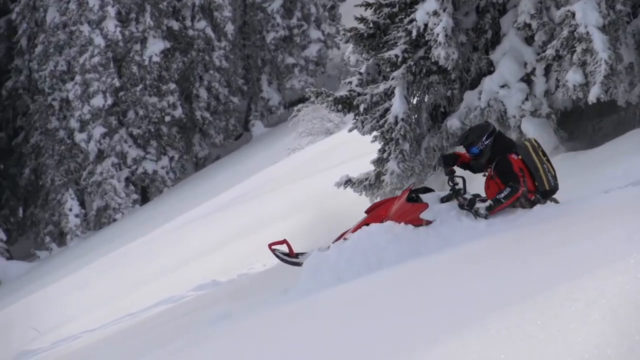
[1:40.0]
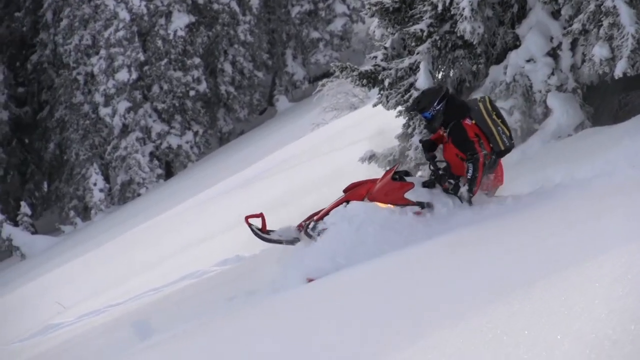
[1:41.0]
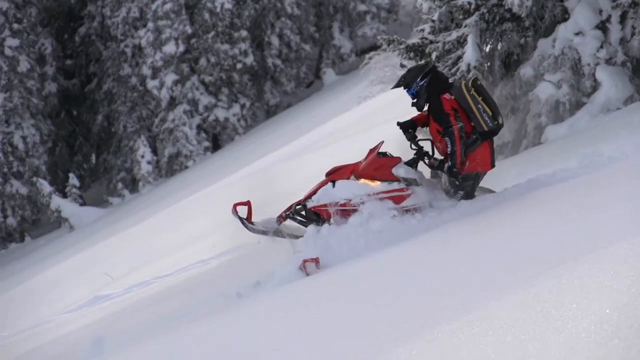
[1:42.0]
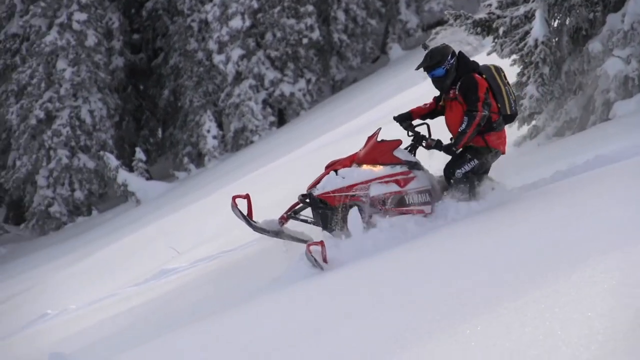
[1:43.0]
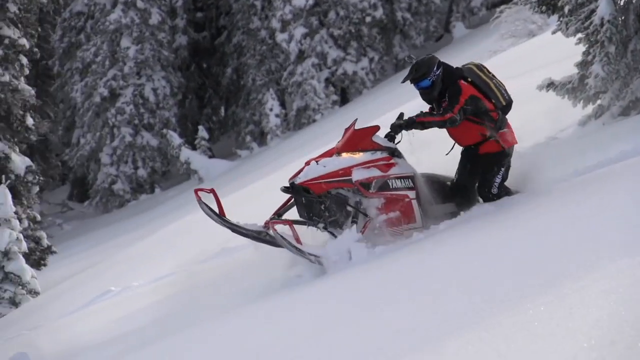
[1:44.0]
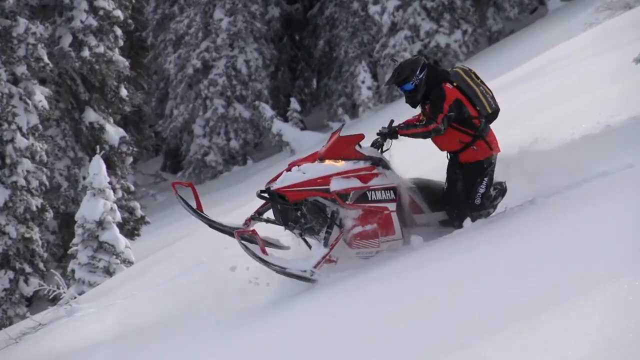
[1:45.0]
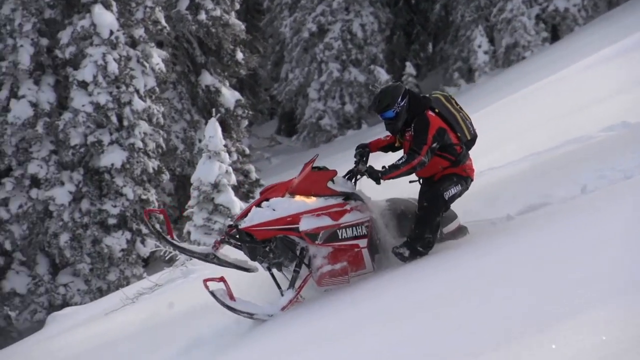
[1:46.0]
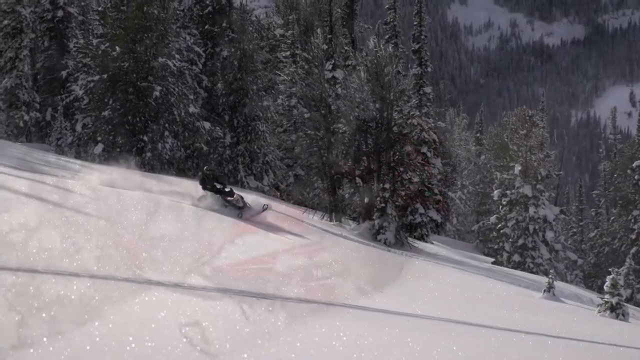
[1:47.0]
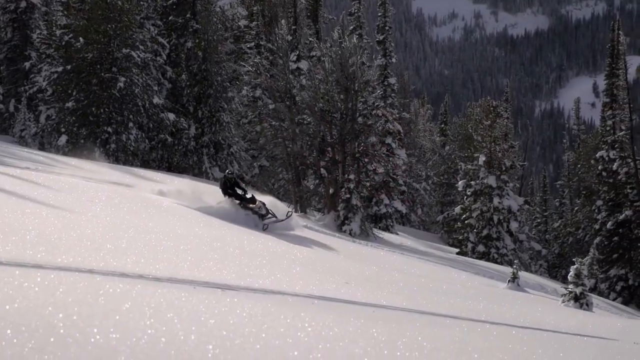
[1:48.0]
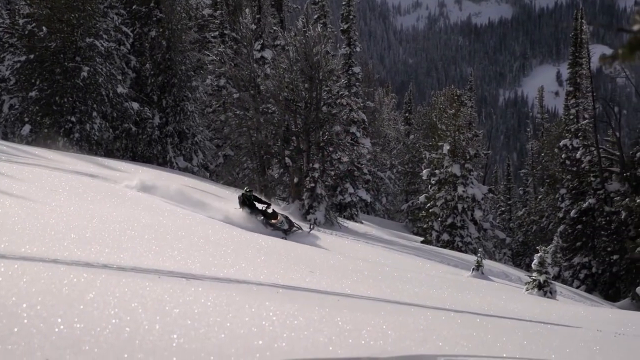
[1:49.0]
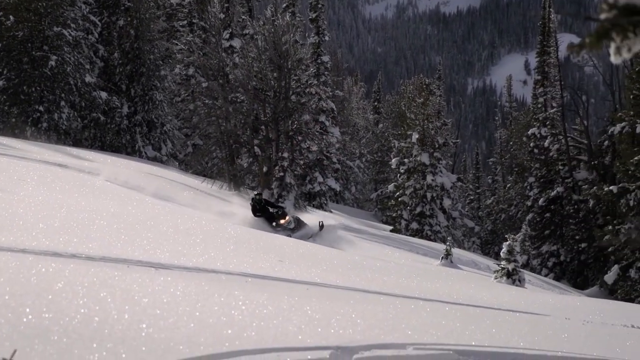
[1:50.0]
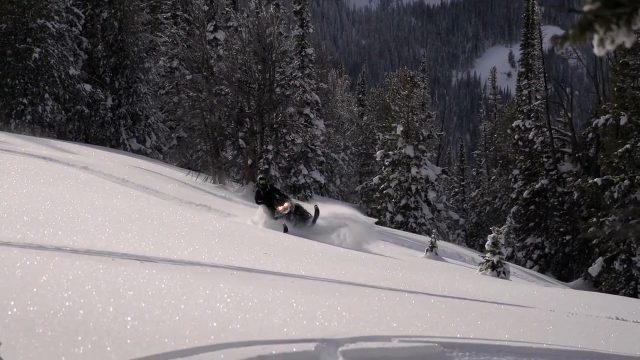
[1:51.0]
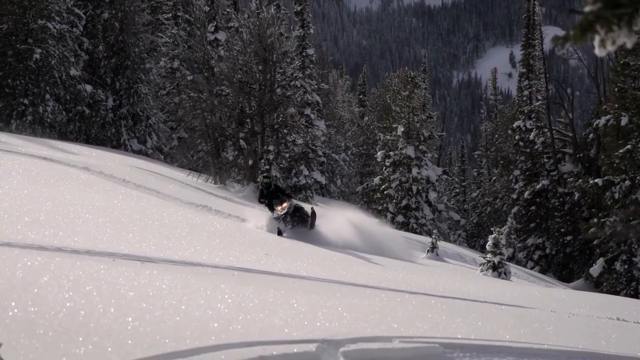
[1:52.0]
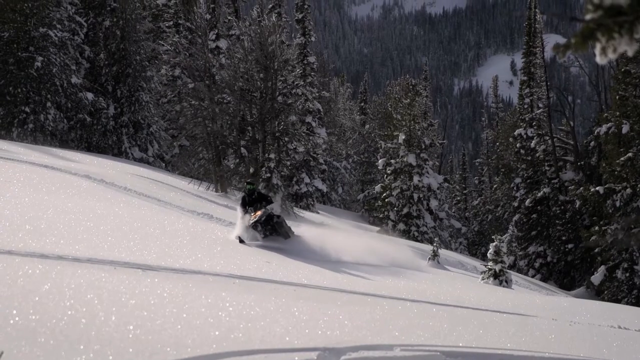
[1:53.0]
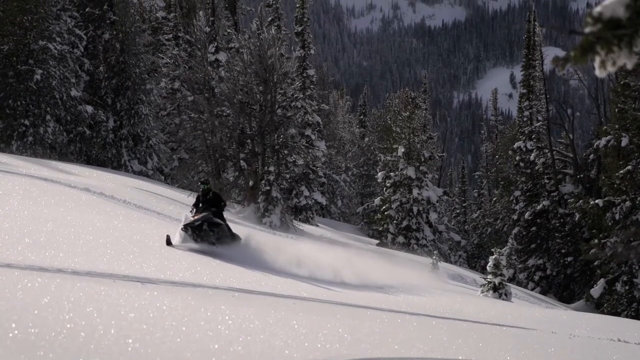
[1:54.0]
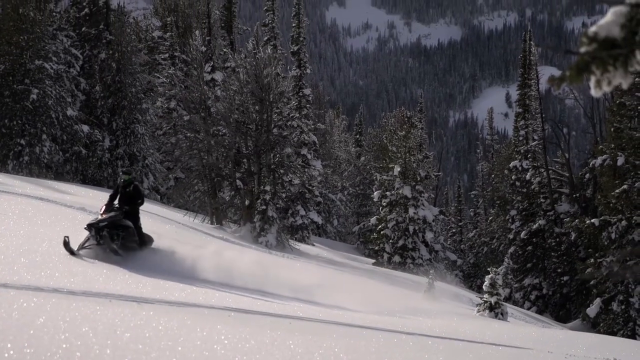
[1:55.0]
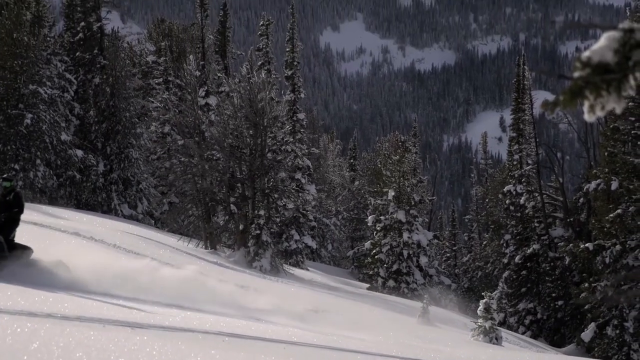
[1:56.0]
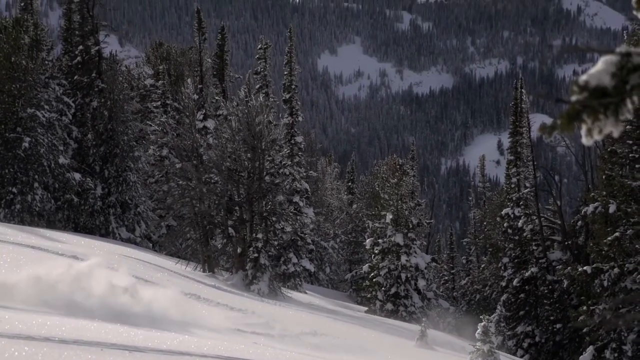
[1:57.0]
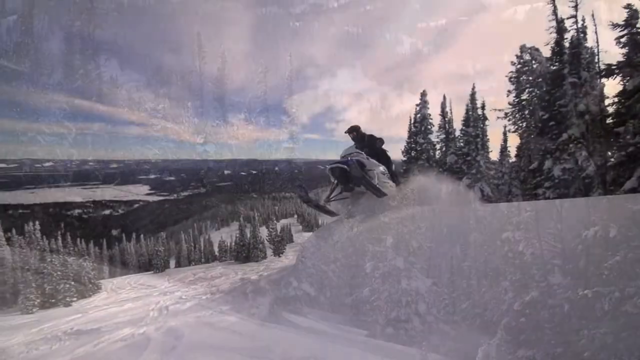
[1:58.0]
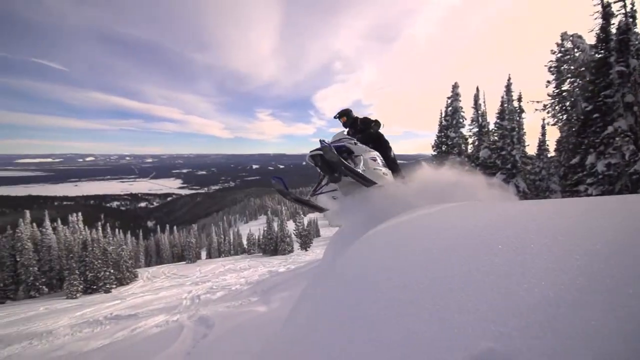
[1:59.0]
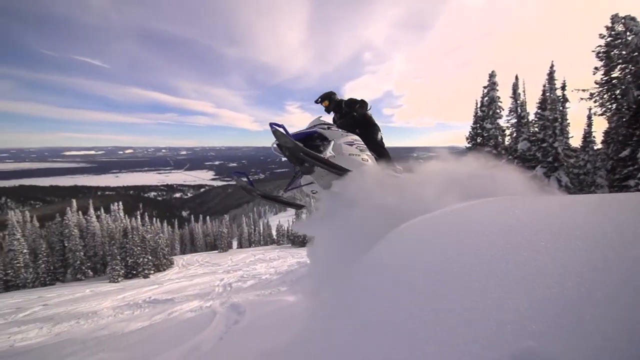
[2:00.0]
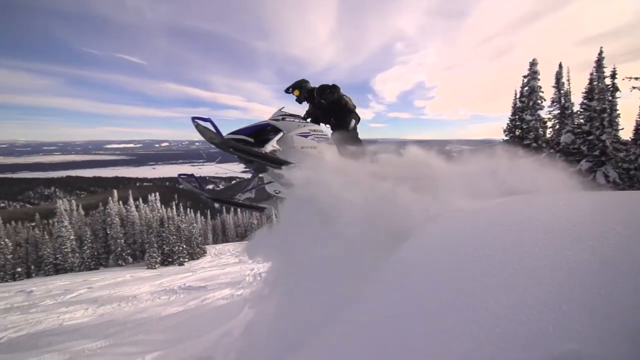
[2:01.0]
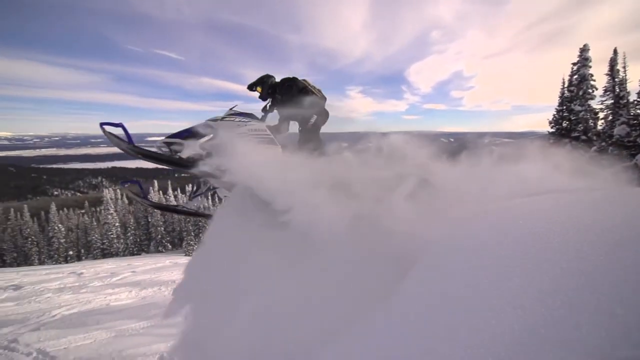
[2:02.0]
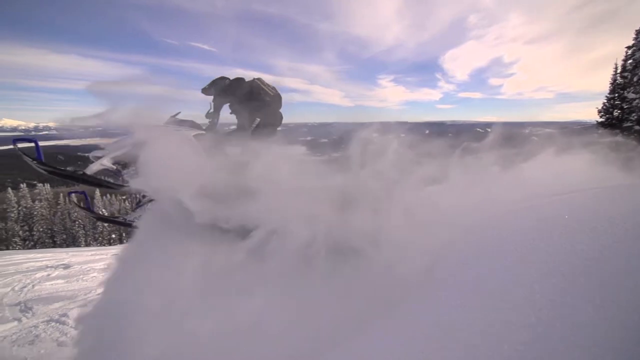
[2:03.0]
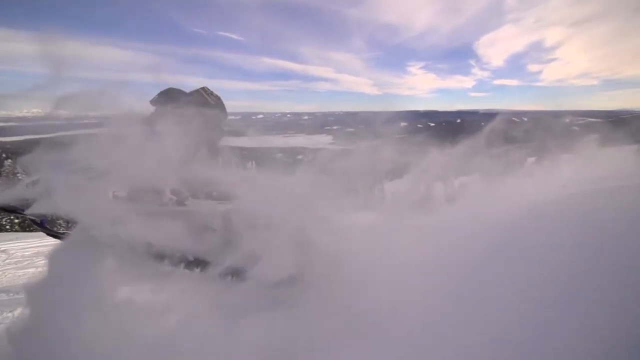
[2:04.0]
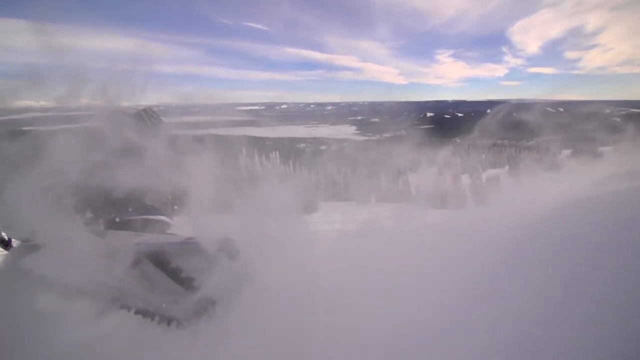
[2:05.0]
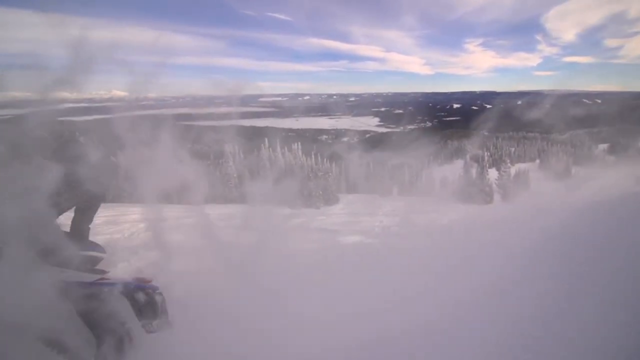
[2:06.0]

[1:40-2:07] A red and white snowmobile with black handlebars is ridden by a rider in black pants with white text on the sides of the legs, a red top with black trim, a dark gray backpack with yellow trim, a black helmet, and sunglasses, likely to protect from sun glare. He appears to be on a steep mountain or hillside, with snow-covered evergreen trees in the background. White text on the side of the snowmobile reads "Yamaha." Next, another snowmobile rider rides down or along the side of a mountainside, disturbing the snow. Where it is not disturbed, the snow looks kind of crystalline and shiny. A plethora of evergreen trees covers the entire mountain in the background. Then a white snowmobile with a little blue trim is ridden by a rider in black pants, a black top and a black helmet, with a backpack on his back. He does a minor jump off a little lump in the snow.